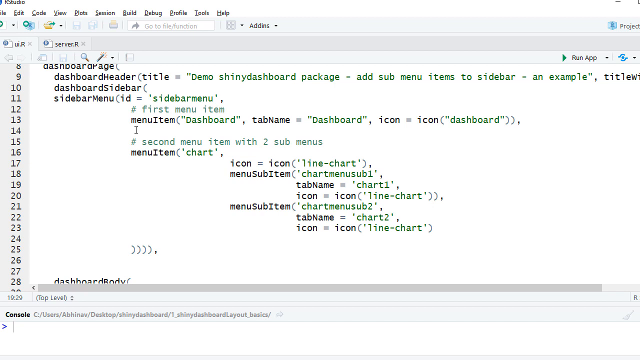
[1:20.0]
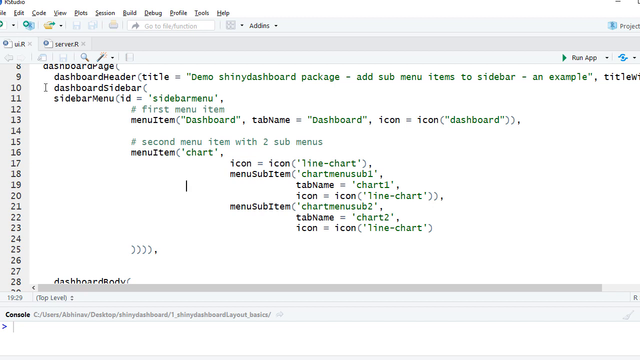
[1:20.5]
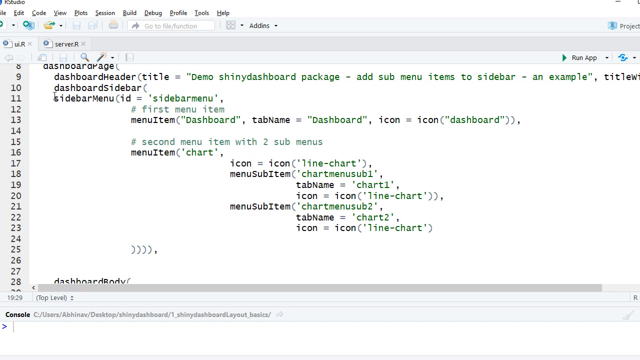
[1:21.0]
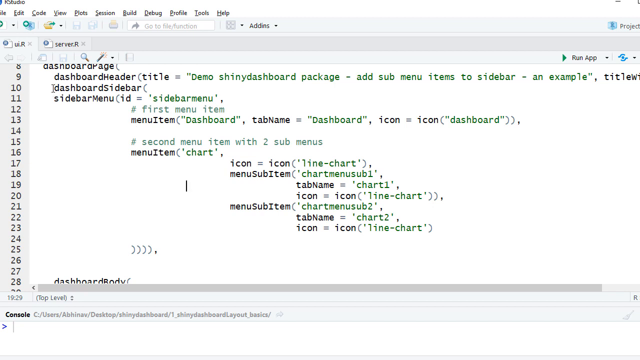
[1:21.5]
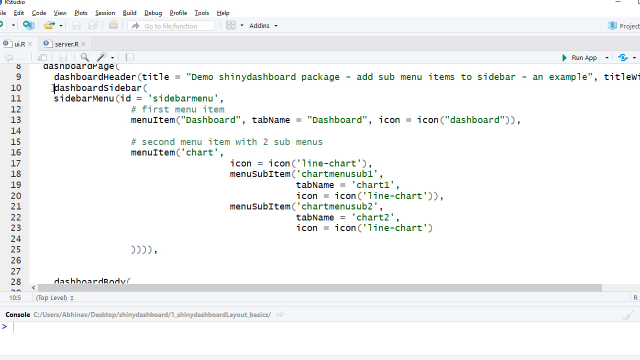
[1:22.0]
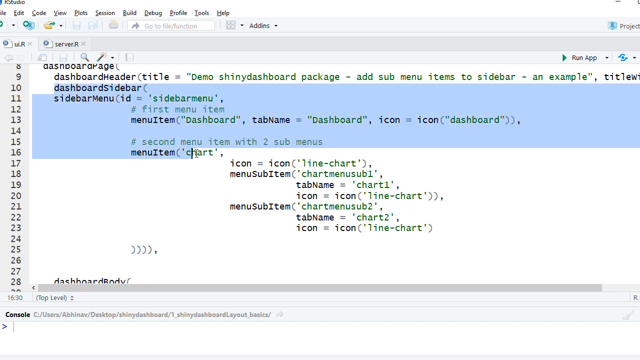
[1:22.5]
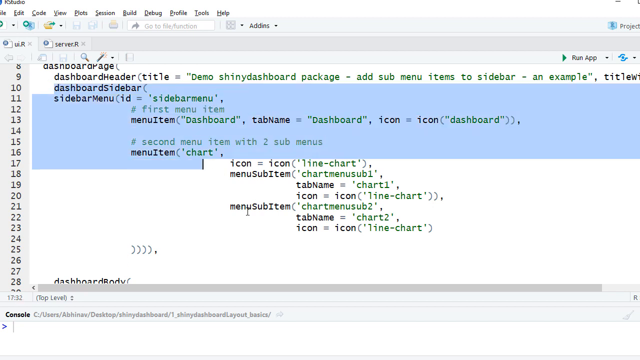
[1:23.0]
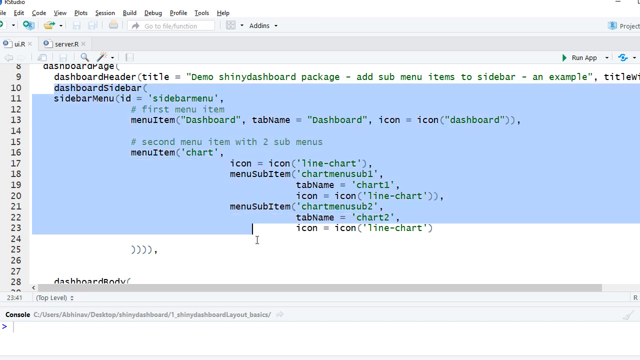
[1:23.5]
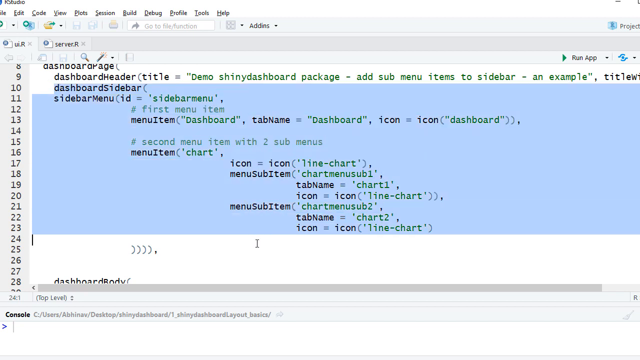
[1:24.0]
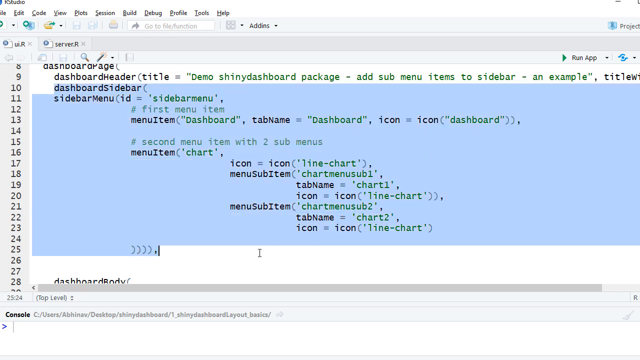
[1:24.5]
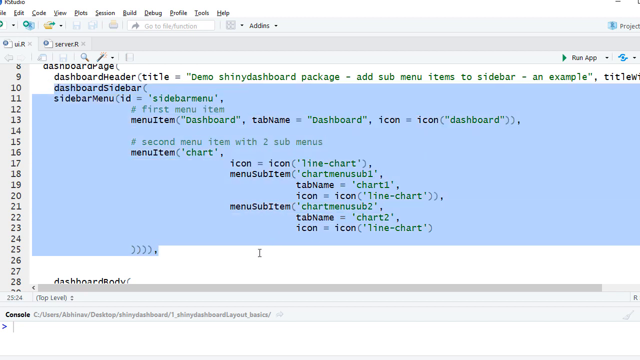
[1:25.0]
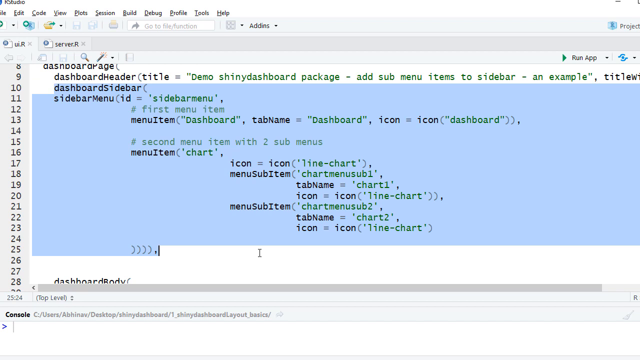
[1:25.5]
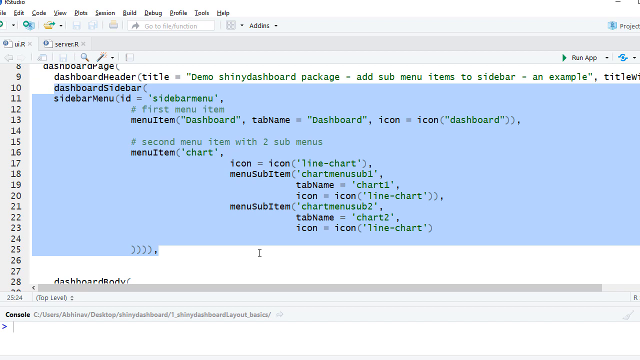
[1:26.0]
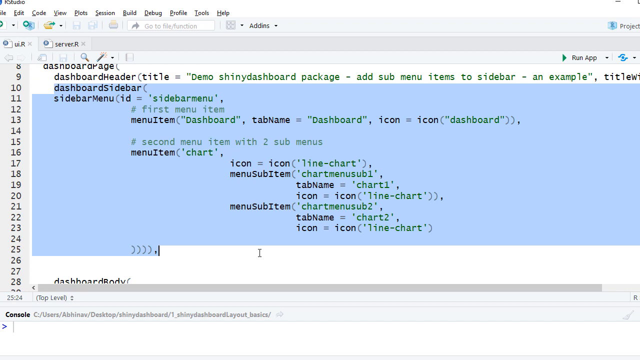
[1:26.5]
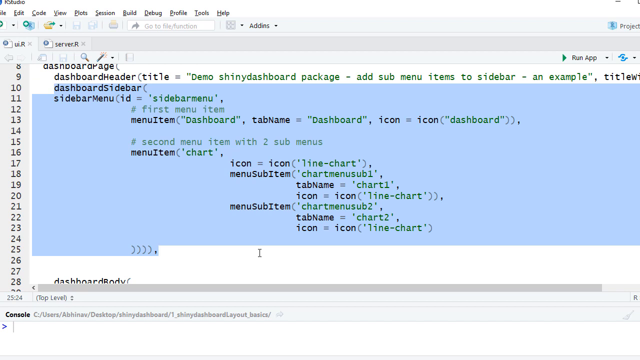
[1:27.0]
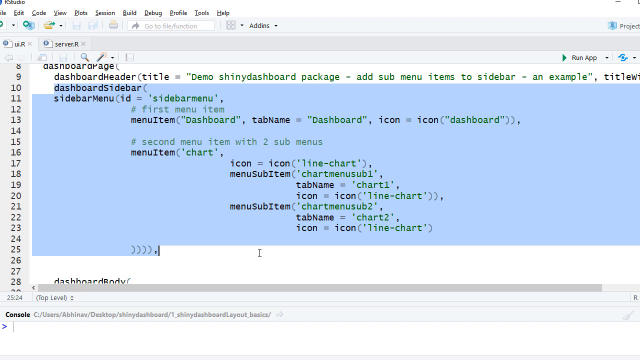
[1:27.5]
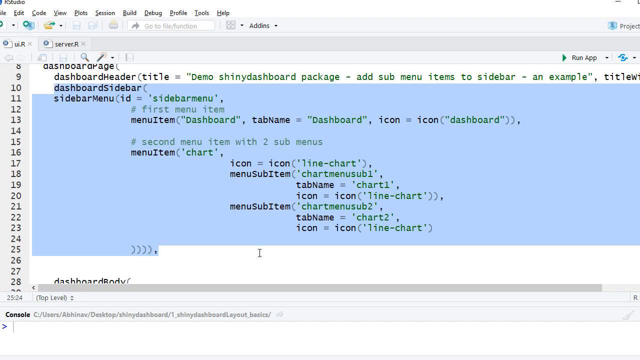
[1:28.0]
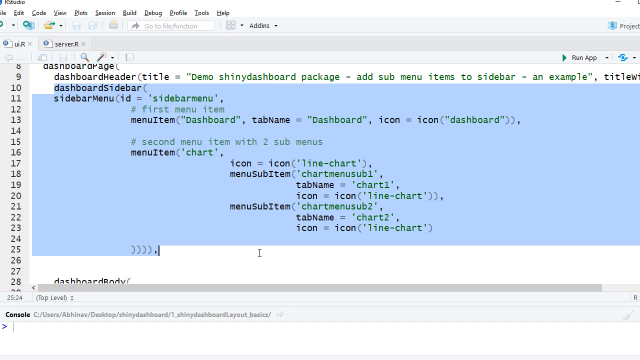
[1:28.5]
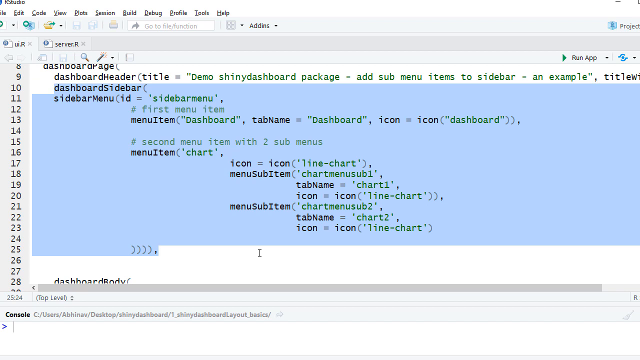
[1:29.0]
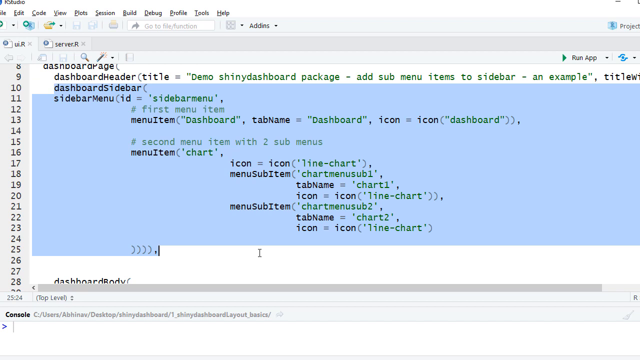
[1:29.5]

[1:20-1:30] The screen full of text on a white backdrop shows black lettering on the left-hand side and green lettering on the right-hand side. The user highlights text in blue with the mouse, then puts a bunch of parentheses toward the bottom of the page, with the cursor roughly in the middle of the page. Everything is highlighted in blue again, and then the blue highlighting is removed. The page runs from line 8 to line 28, with black lettering on the left-hand side and green lettering on the right-hand side.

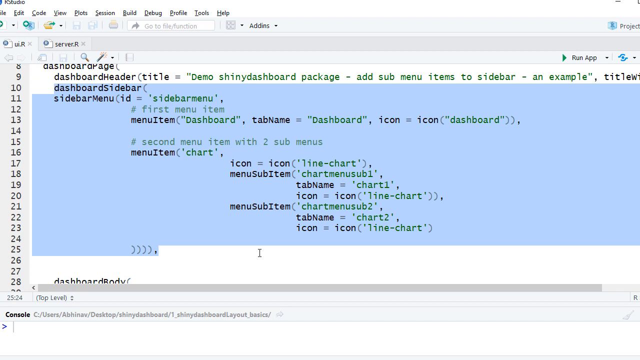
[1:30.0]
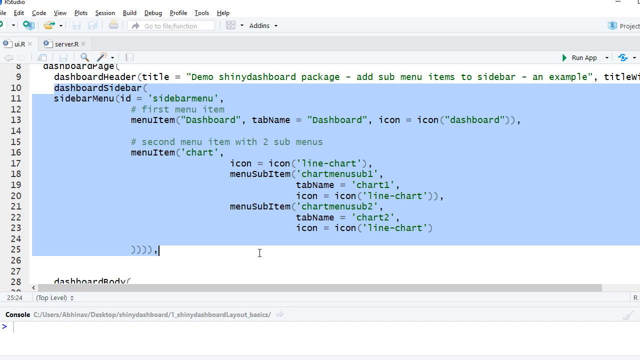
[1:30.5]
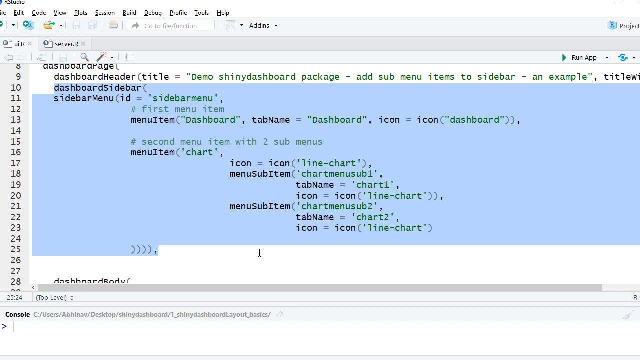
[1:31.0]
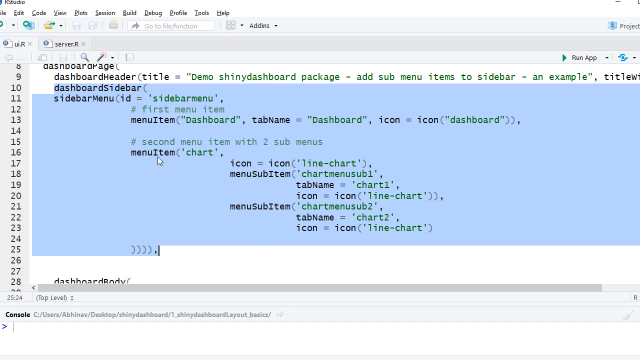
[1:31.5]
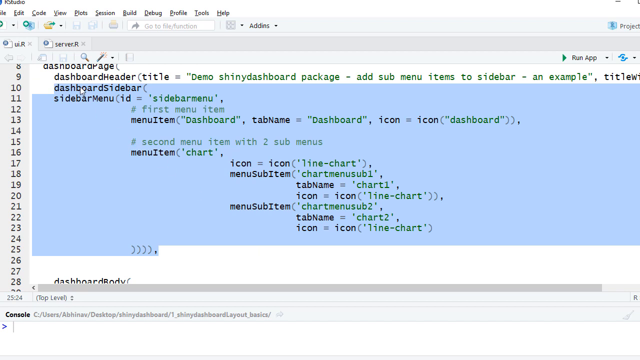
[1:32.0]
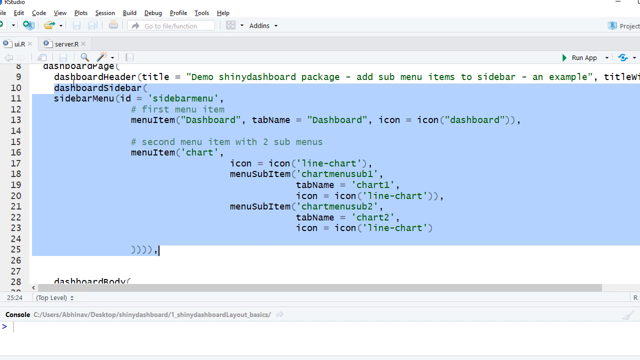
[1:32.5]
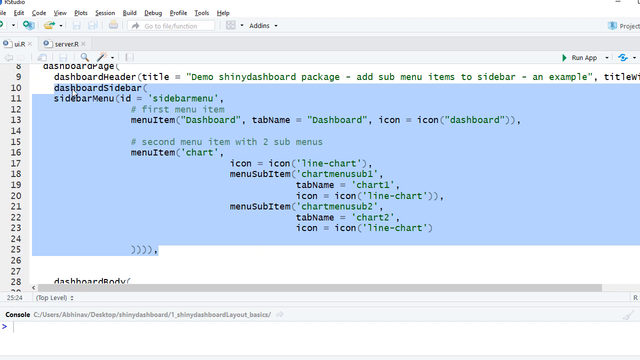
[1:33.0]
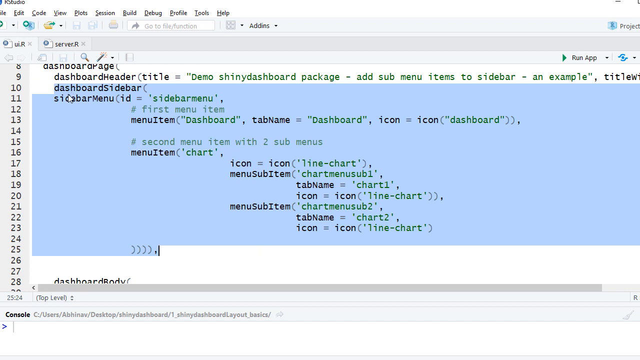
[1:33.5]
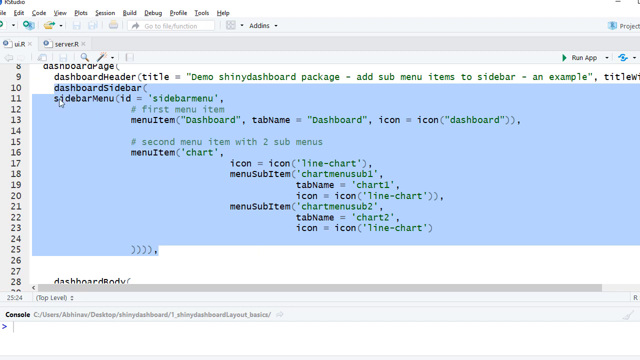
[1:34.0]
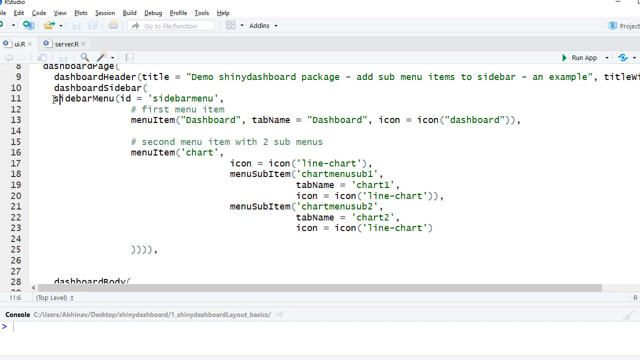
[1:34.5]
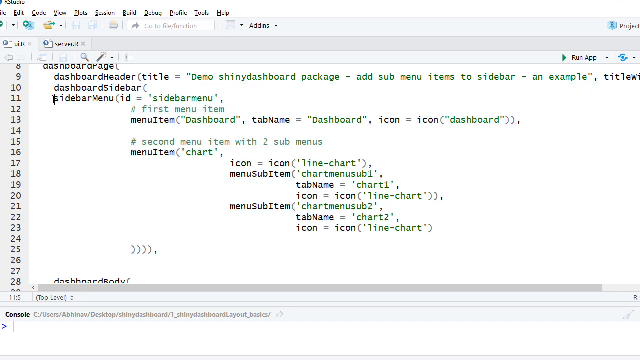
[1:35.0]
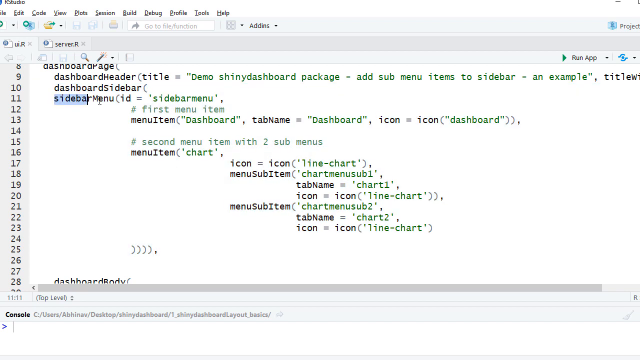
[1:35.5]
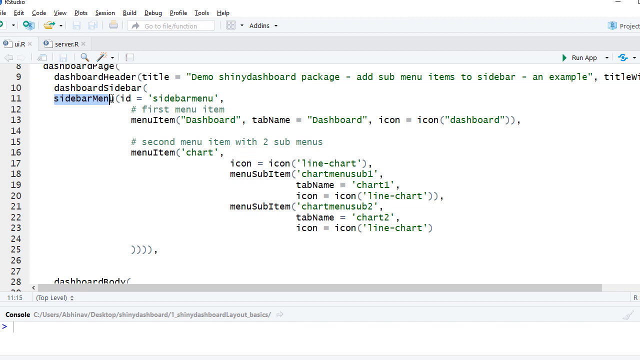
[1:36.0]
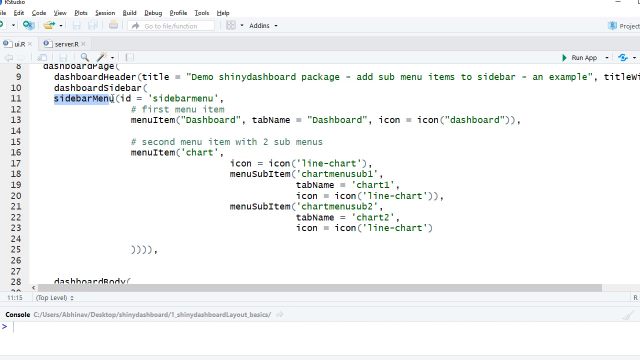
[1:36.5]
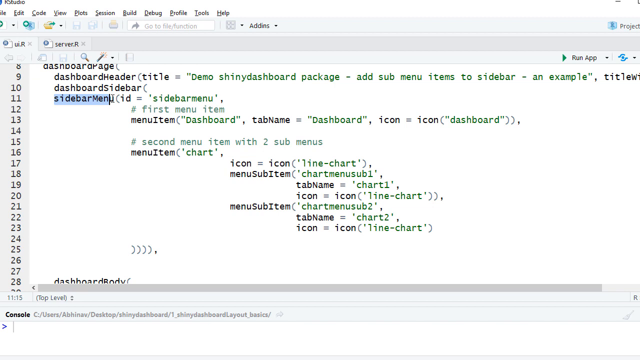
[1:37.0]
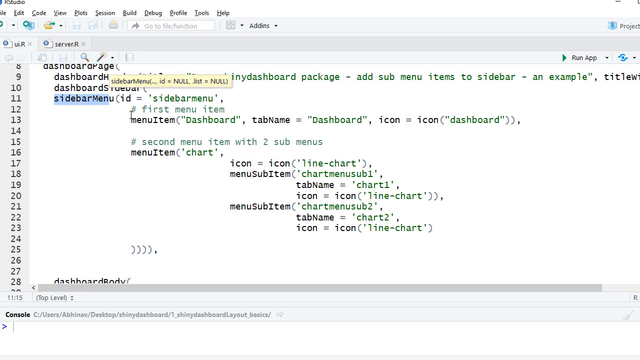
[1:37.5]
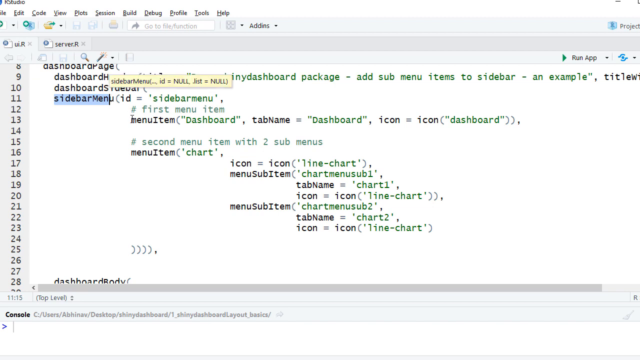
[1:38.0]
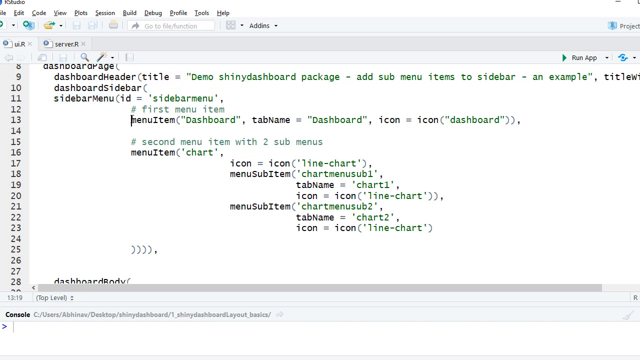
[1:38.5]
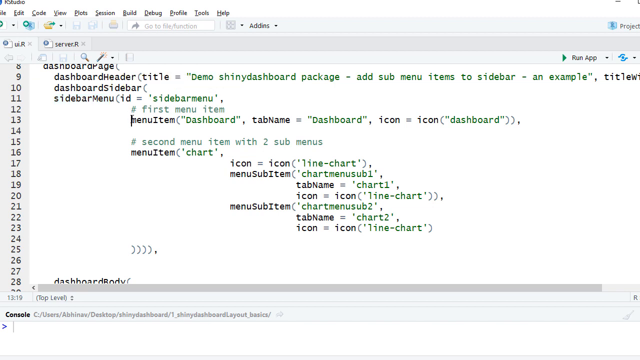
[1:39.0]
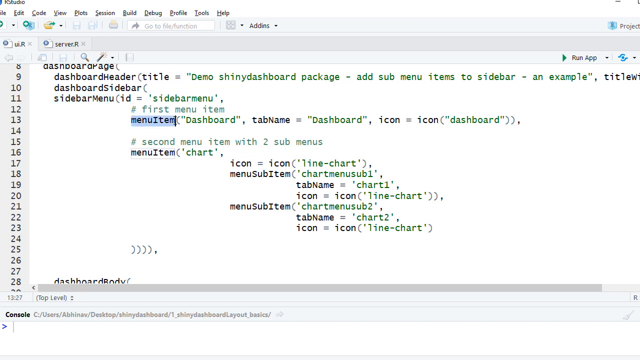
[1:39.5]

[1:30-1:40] The same screen shows lines 8 to 28 on an all-white backdrop, with black lettering on the left-hand side and green lettering on the right-hand side. The user highlights "sidebar menu" in blue, then highlights a big group of the black and green lettering in blue shading. Among the words are dashboard, sidebar and menu item; the text looks like code.